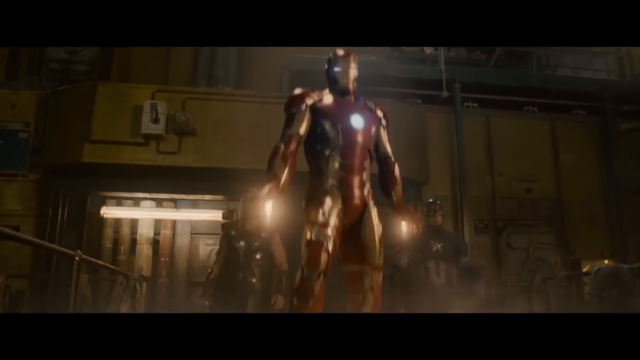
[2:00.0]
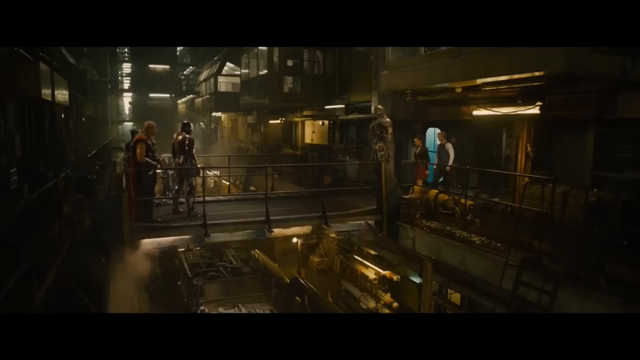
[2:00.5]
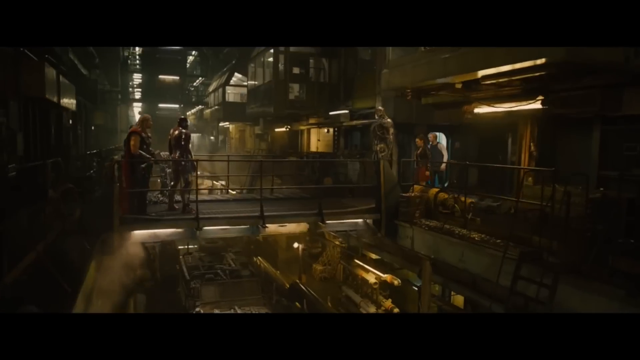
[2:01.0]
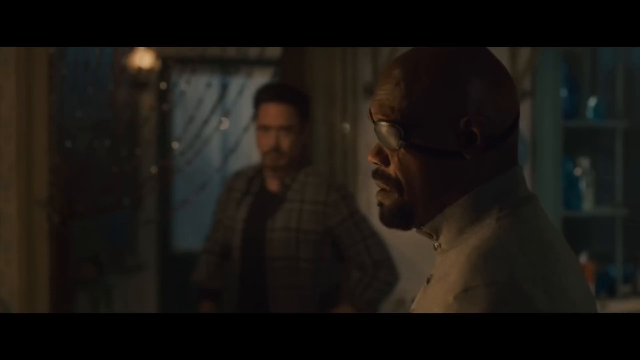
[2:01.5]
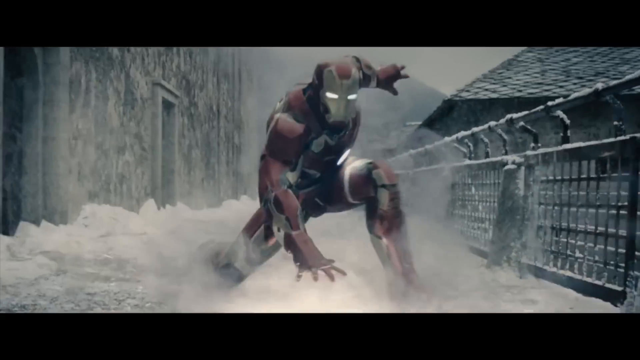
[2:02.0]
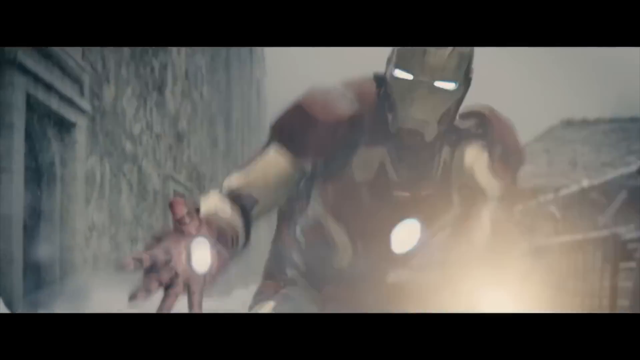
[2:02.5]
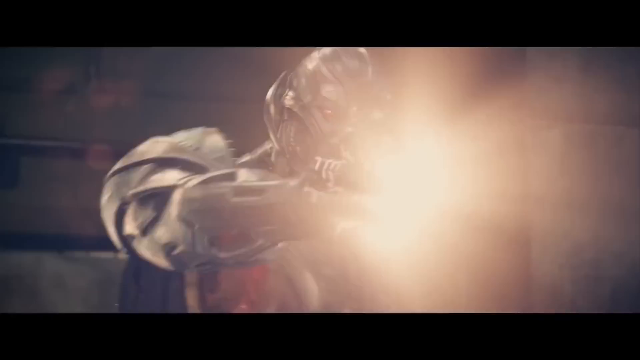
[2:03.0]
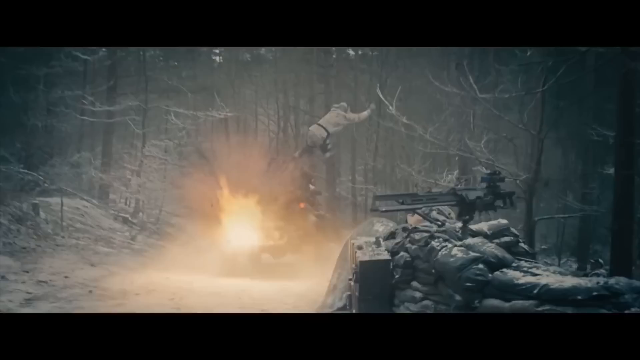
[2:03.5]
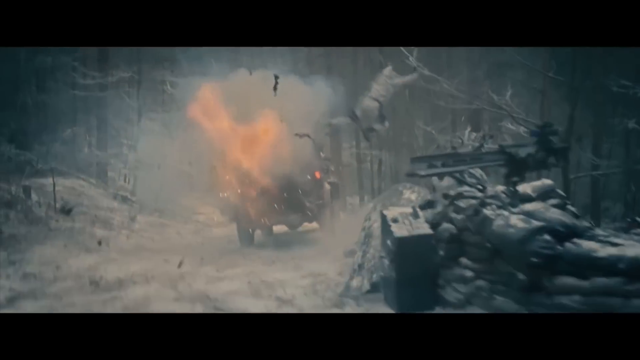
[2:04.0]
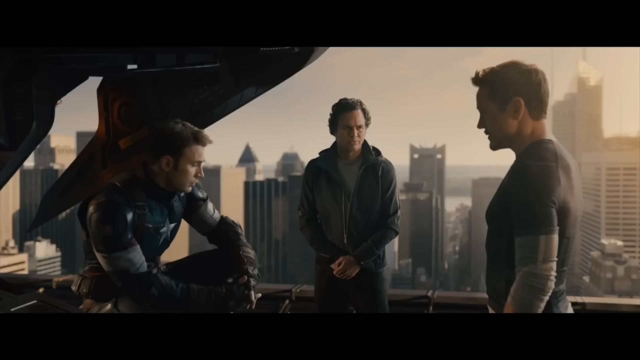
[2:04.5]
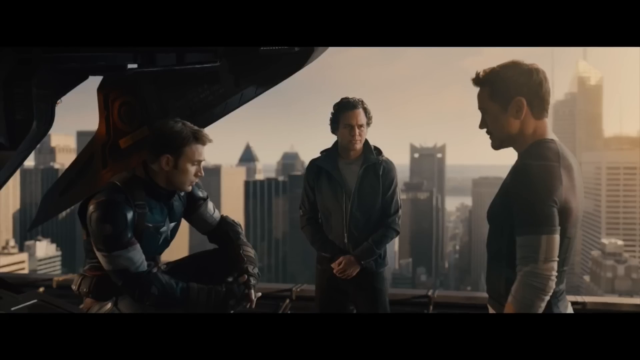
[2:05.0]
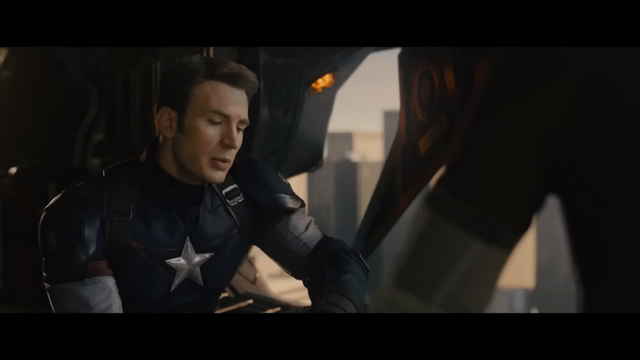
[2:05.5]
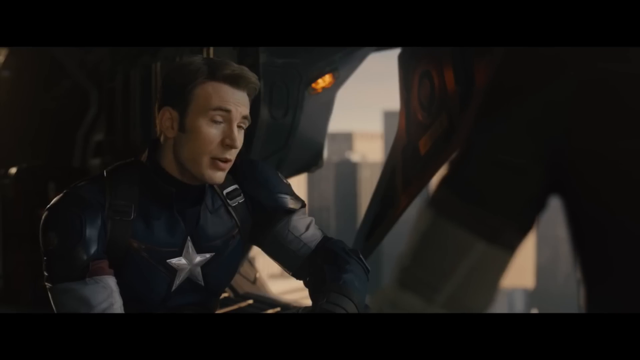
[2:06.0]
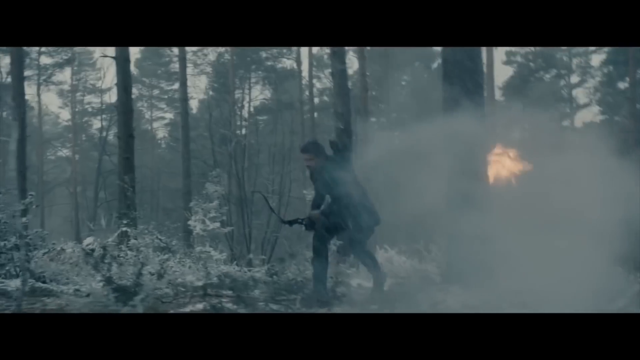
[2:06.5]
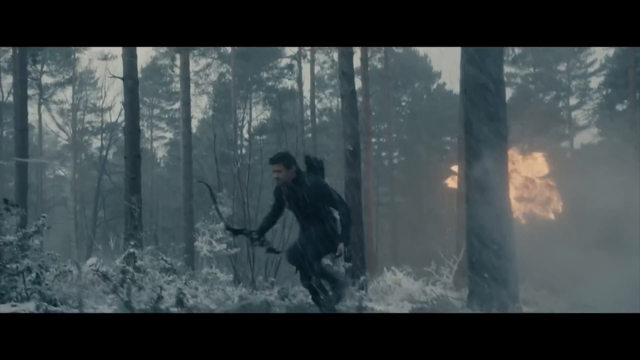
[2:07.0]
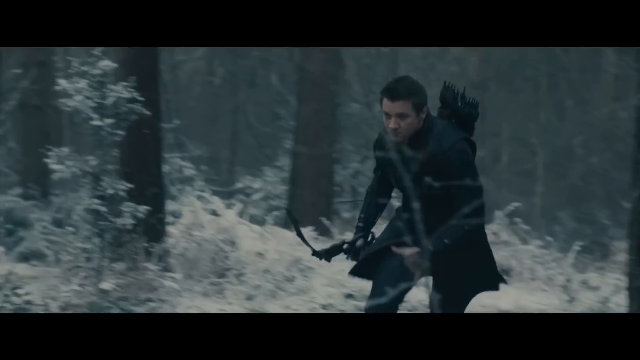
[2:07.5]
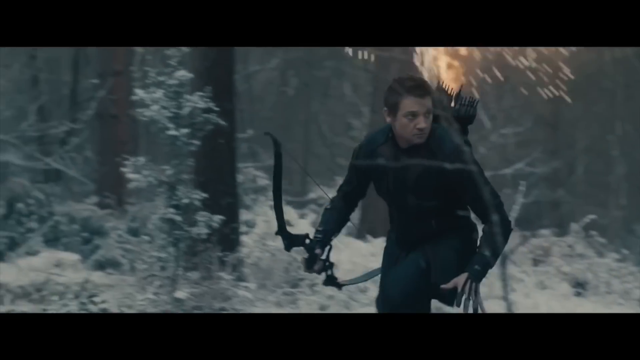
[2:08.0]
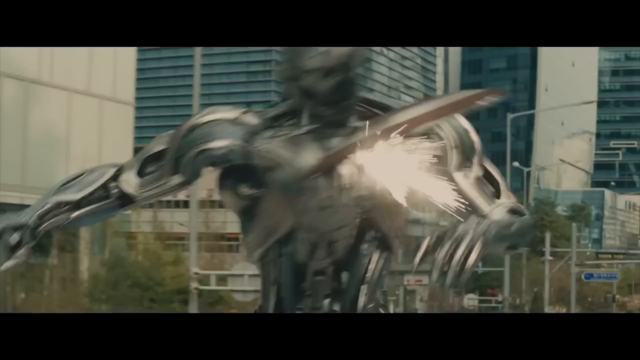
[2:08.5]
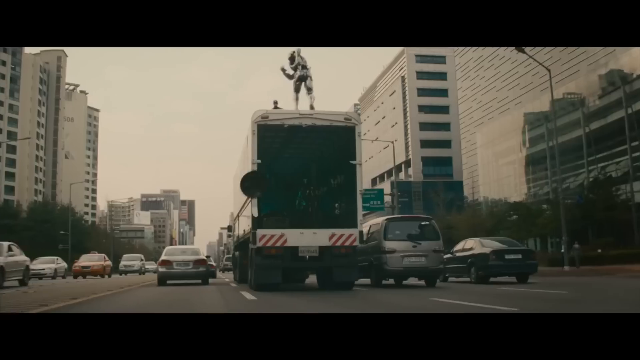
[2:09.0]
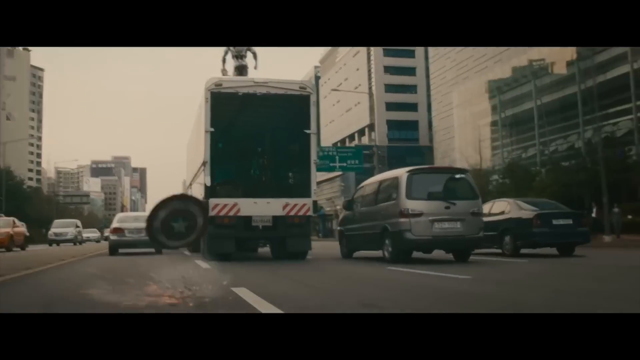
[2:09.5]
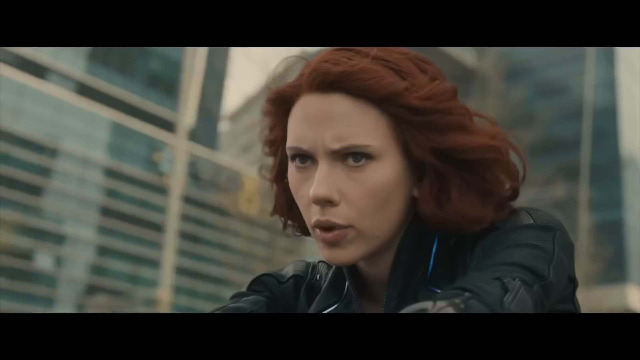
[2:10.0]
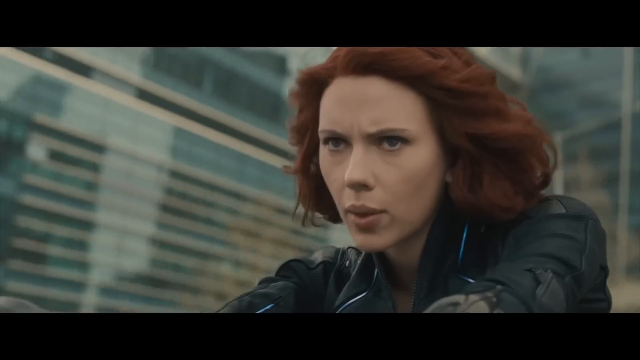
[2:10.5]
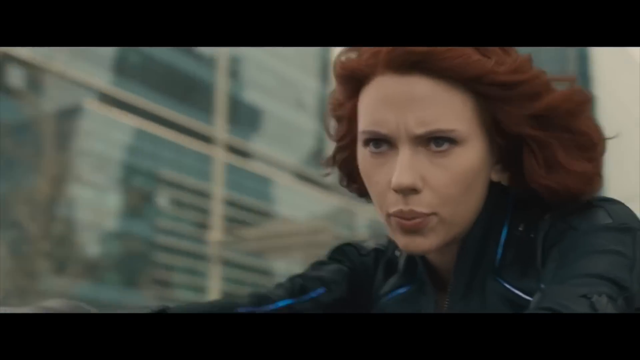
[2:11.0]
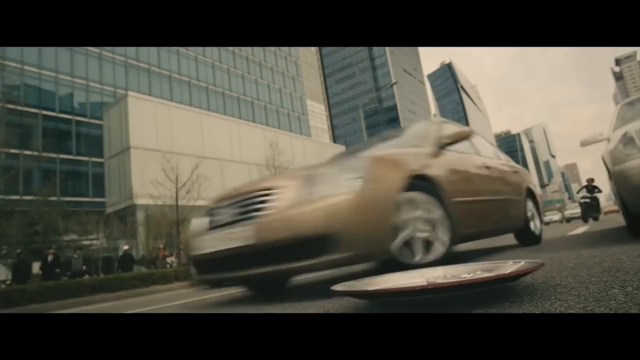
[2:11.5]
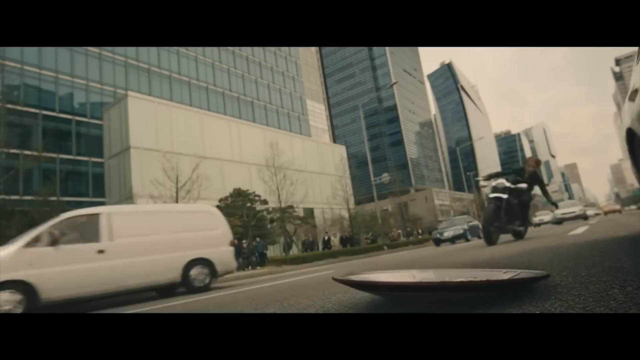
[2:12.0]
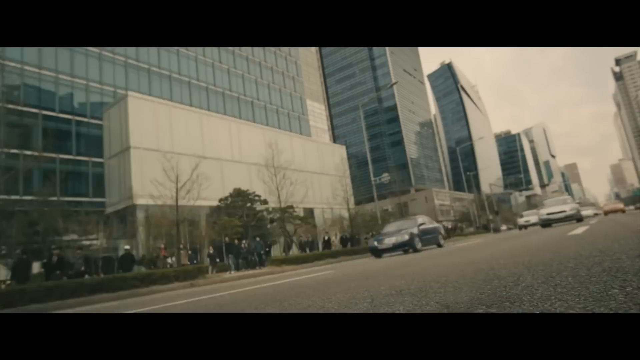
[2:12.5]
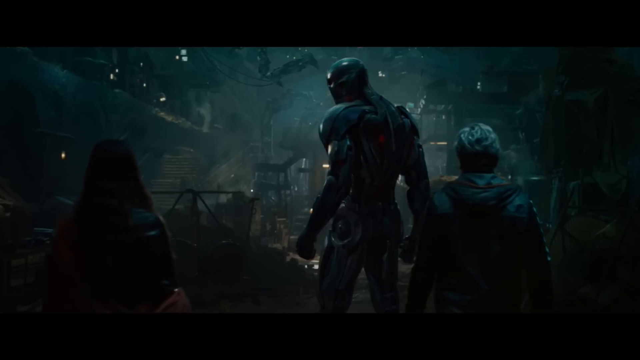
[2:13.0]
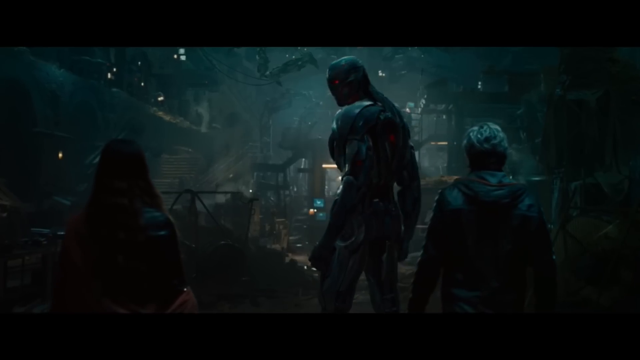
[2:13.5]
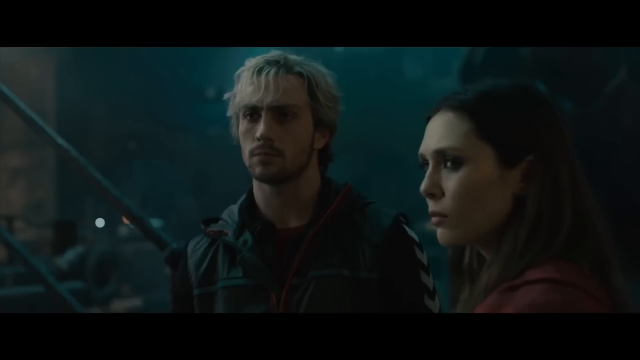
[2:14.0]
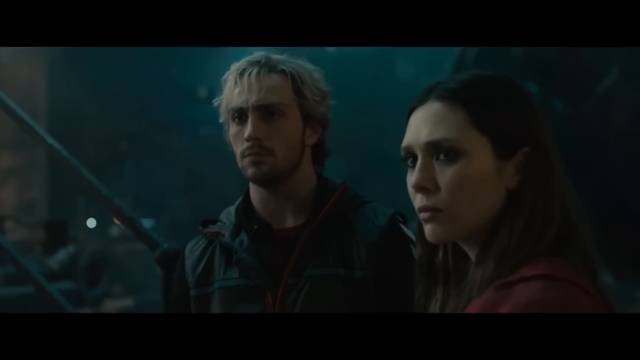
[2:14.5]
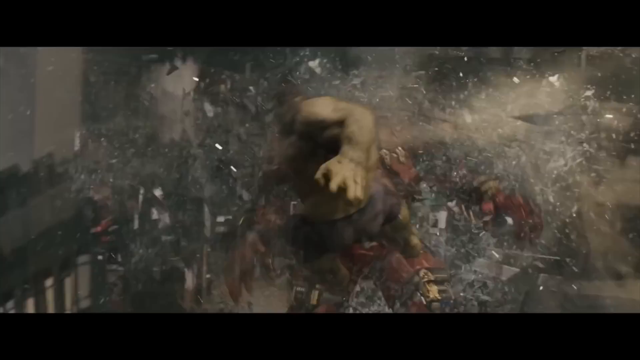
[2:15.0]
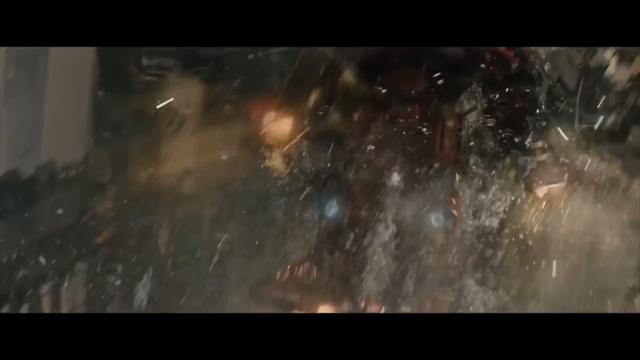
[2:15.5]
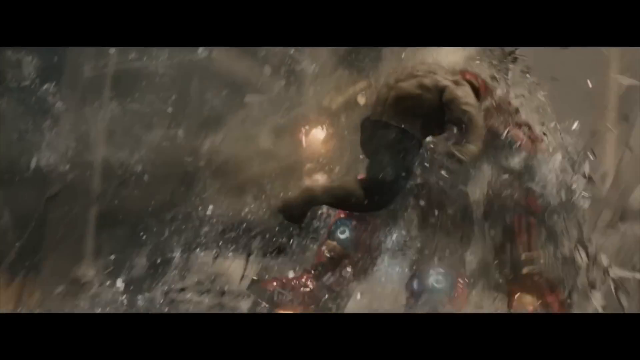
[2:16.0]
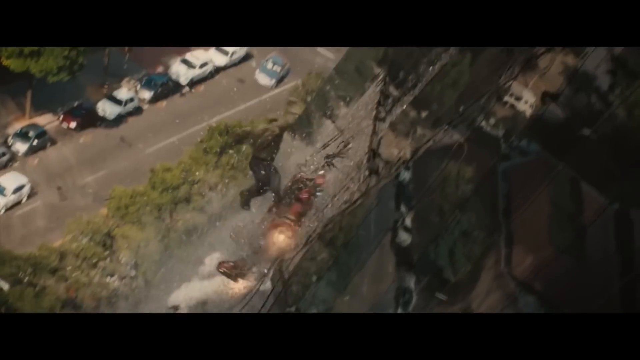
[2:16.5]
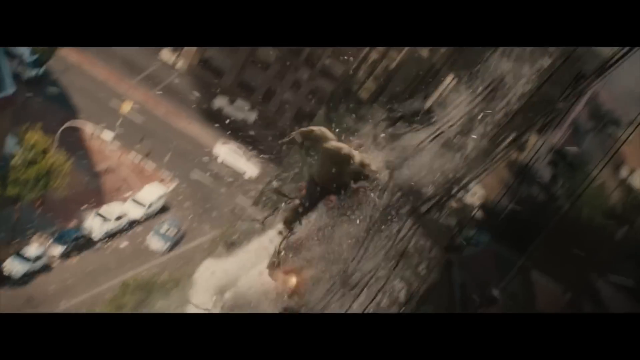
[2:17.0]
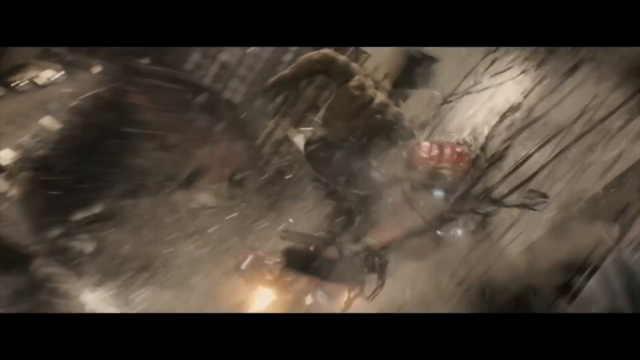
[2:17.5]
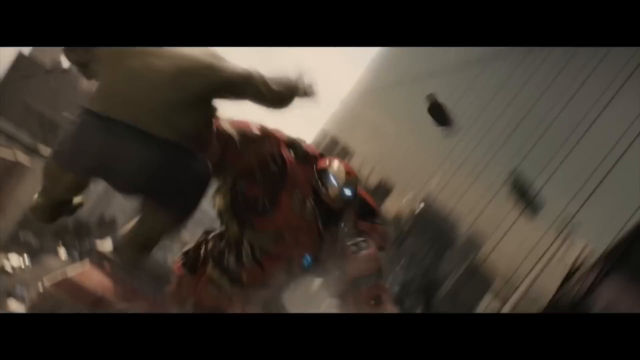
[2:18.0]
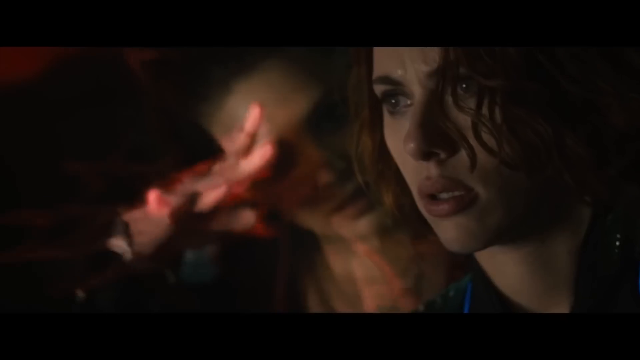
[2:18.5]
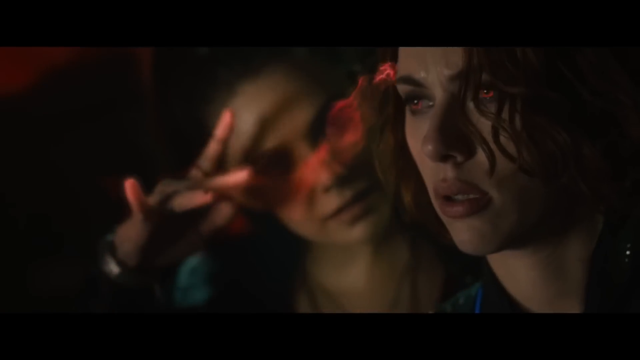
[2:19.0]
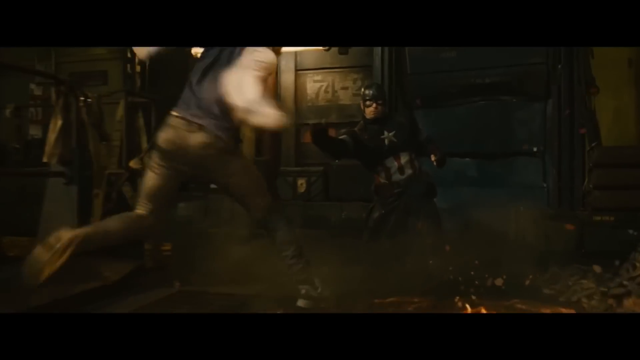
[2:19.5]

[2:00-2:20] A figure appears to have been flying and lands, with what looks to be rocket launchers coming from his hands and legs. As he lands fully armed, the rest of the Avengers face off with two other individuals. They hold a meeting, followed by more fight scenes in what looks to be a small city. The cyborg blasts some sort of red electricity from its hands. Captain America speaks to the Avengers, and more scenes show the same streets. Hulk climbs through buildings again, and Captain America is hit.